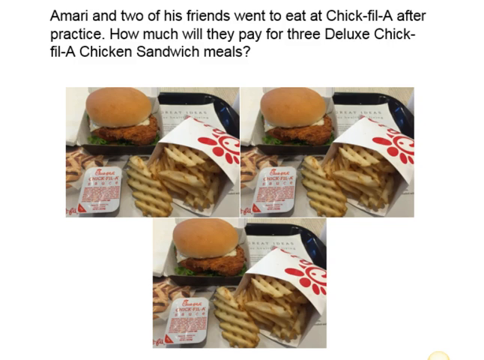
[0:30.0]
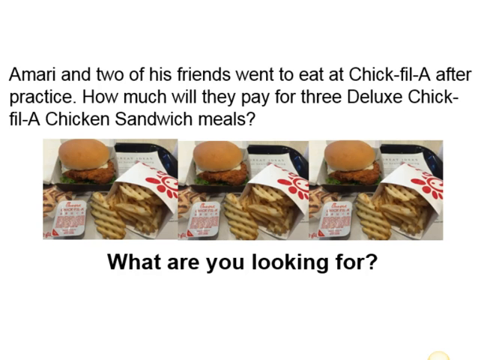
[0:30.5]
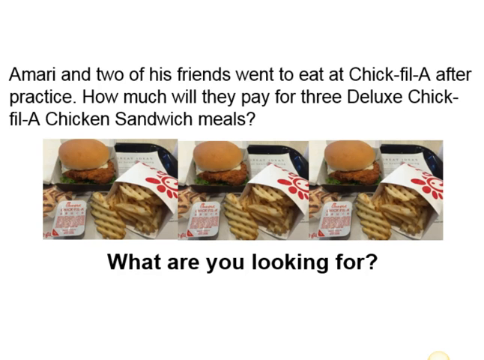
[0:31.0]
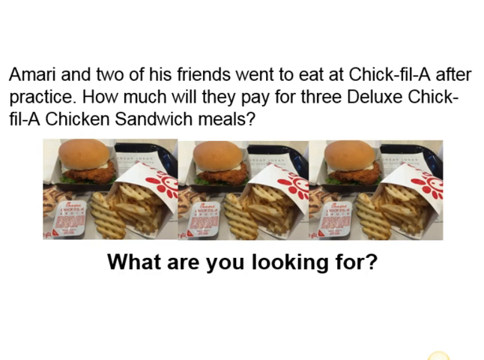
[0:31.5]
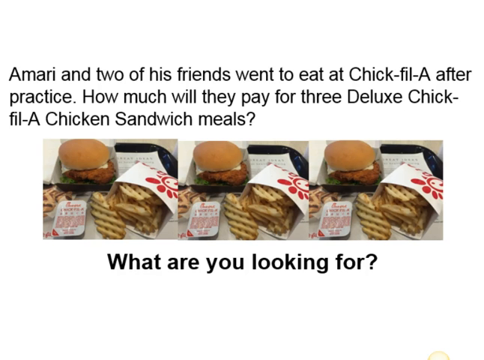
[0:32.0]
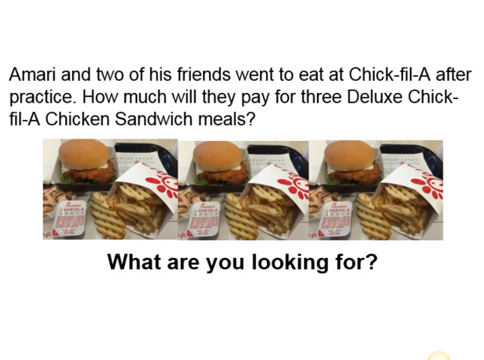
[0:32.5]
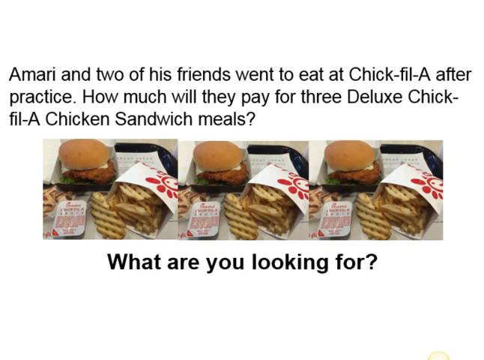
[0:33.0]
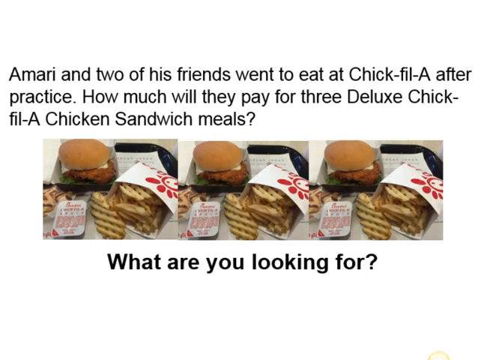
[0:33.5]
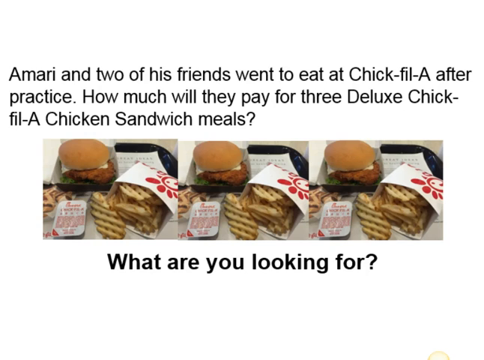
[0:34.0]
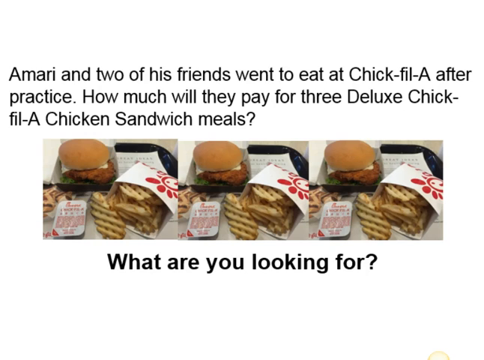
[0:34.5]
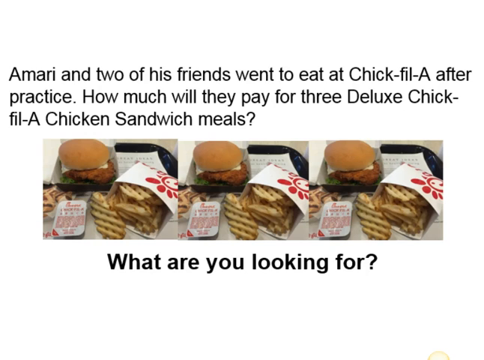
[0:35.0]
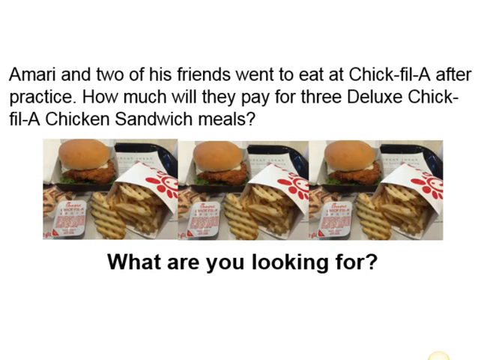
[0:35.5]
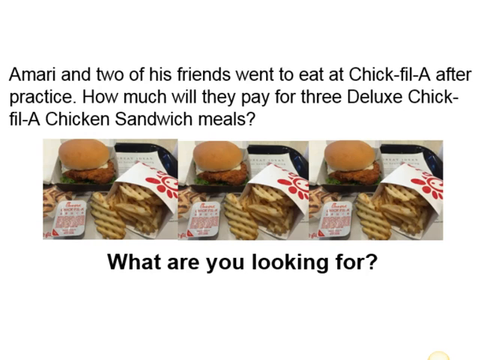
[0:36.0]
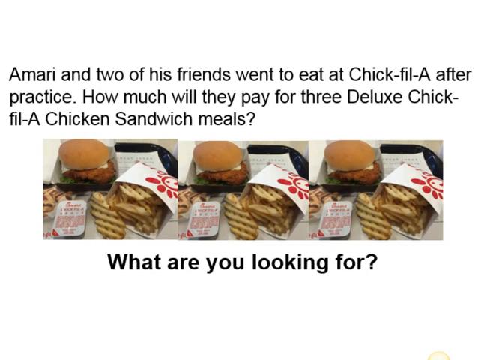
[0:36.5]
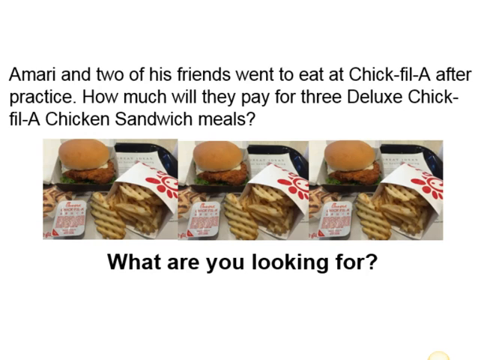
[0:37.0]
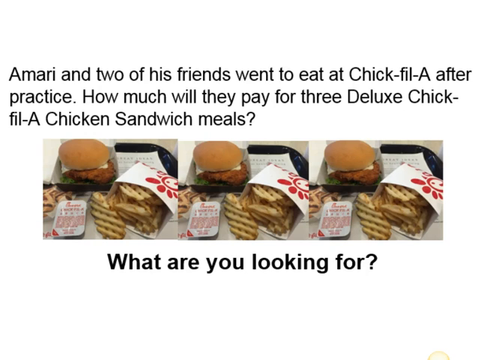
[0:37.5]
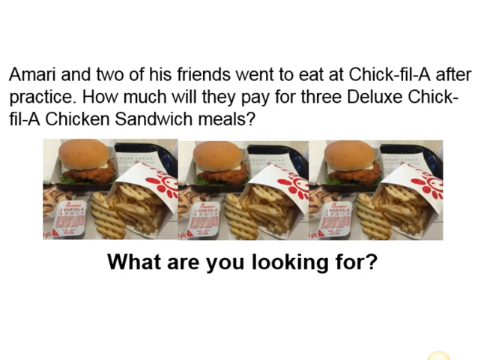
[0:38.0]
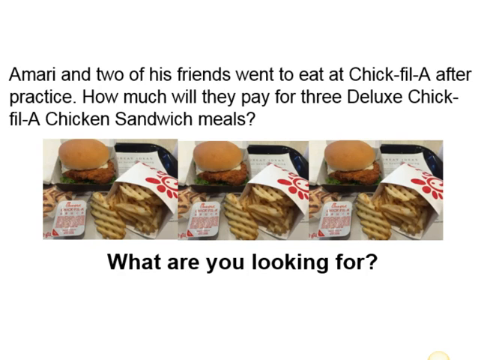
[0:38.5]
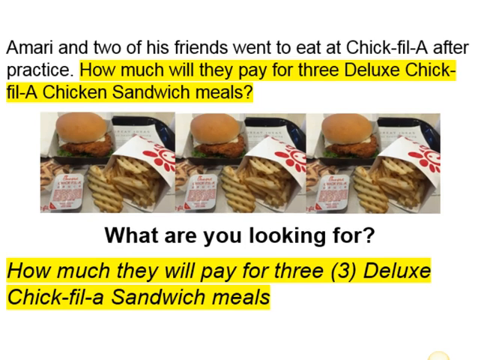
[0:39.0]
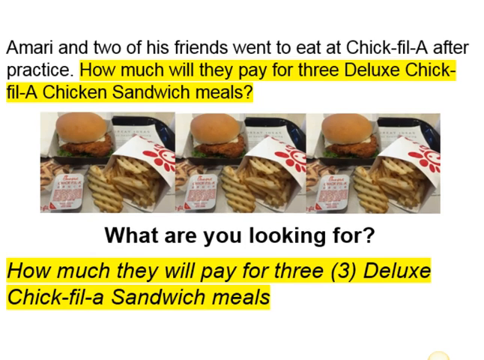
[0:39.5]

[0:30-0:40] The same pictures are shown, then the layout changes so all three small pictures are in a row rather than stacked. Underneath them the text says "what are you looking for?" Above the pictures it says "Amari and two of his friends went to eat at Chick-fil-A after practice. How much will they pay for three deluxe Chick-fil-A chicken sandwich meals?" The bottom of the screen is plain white. Nothing else changes until the very last second, when the second line of the first paragraph is highlighted in yellow.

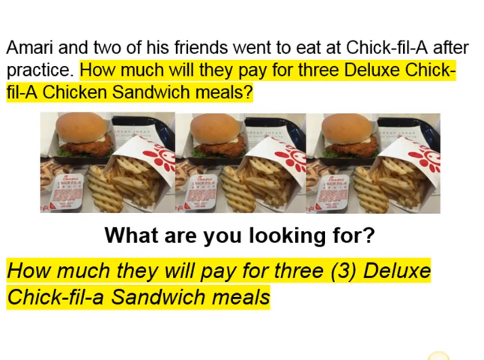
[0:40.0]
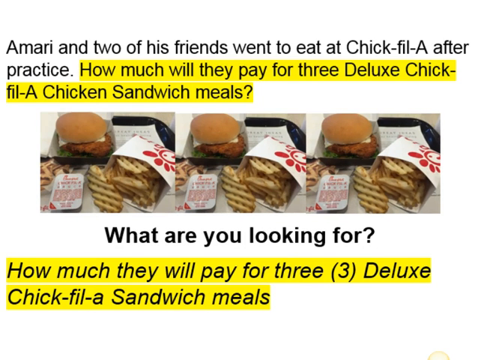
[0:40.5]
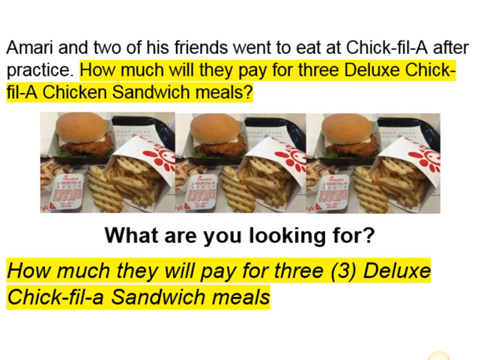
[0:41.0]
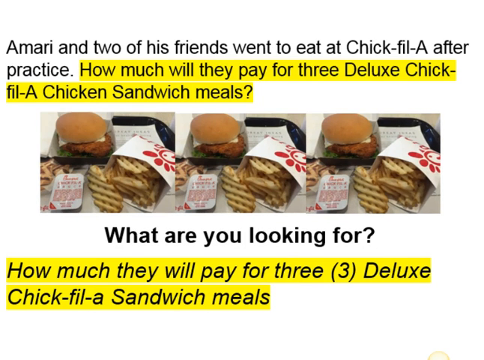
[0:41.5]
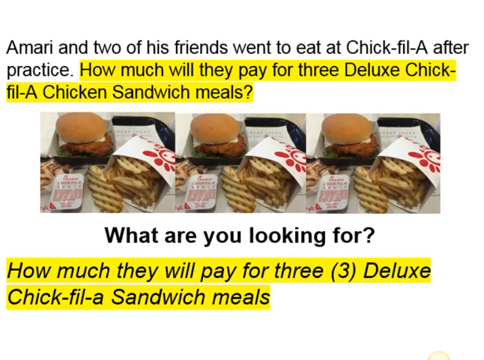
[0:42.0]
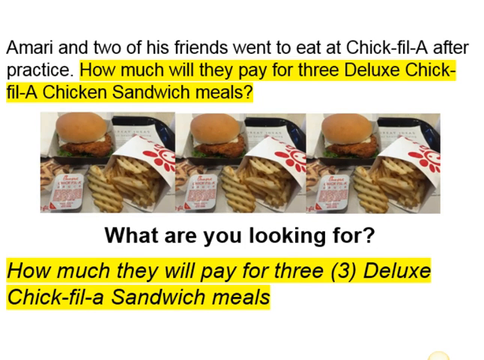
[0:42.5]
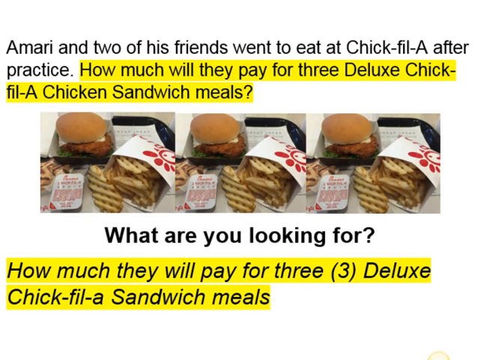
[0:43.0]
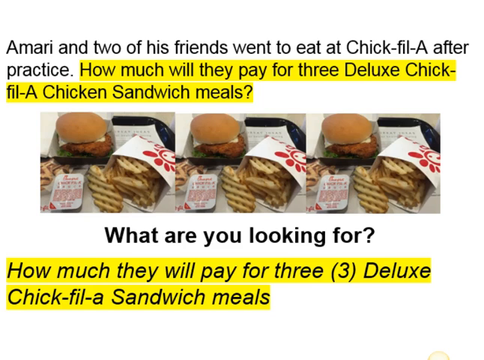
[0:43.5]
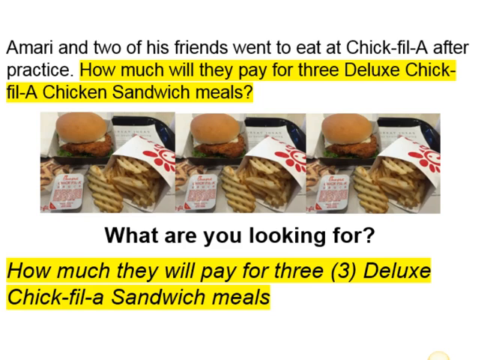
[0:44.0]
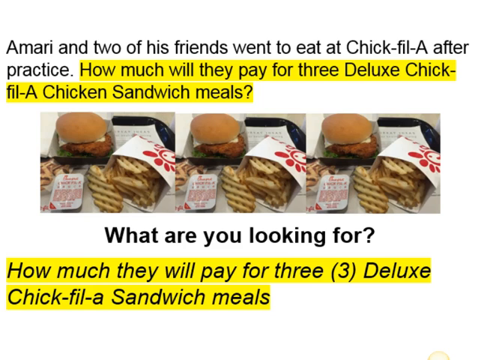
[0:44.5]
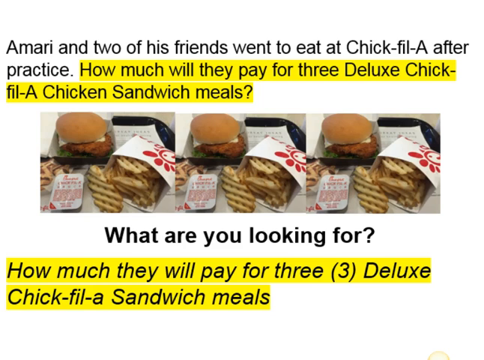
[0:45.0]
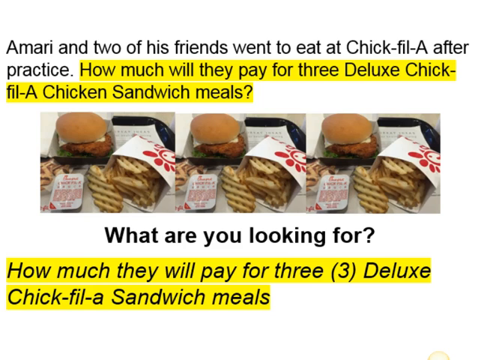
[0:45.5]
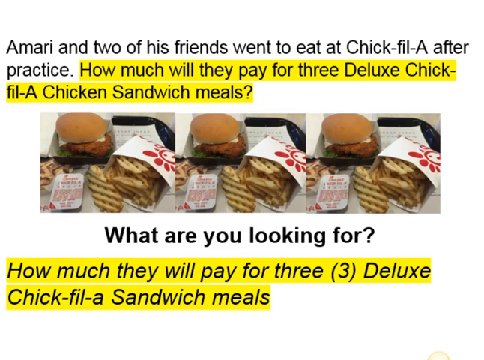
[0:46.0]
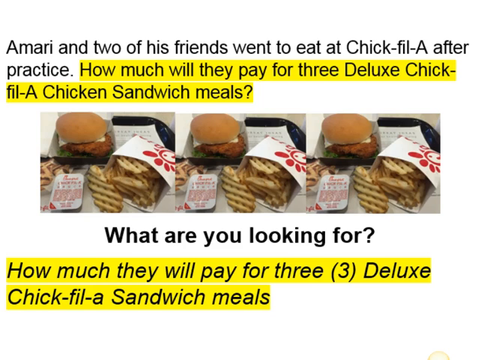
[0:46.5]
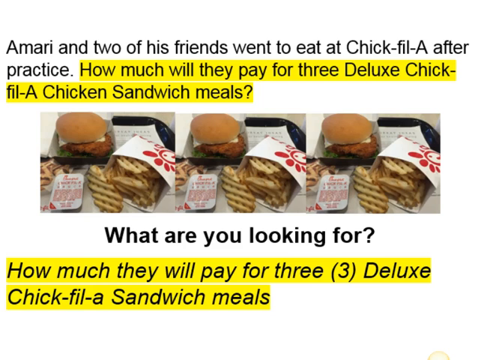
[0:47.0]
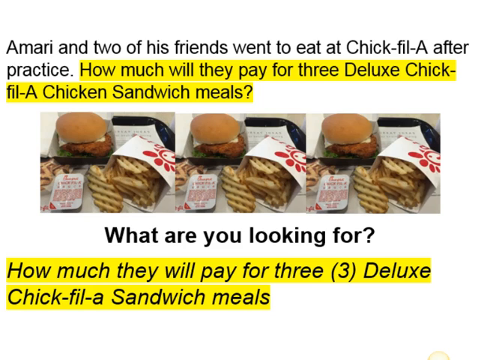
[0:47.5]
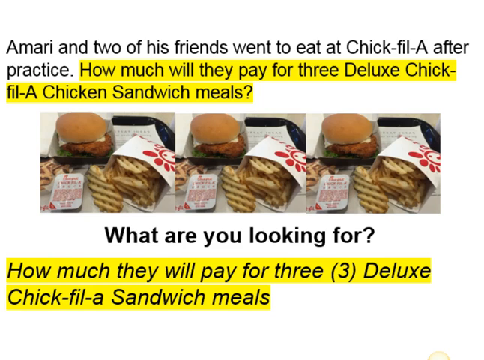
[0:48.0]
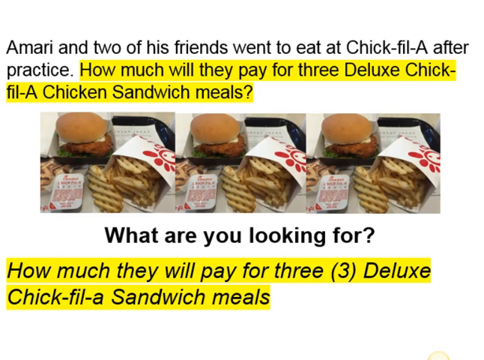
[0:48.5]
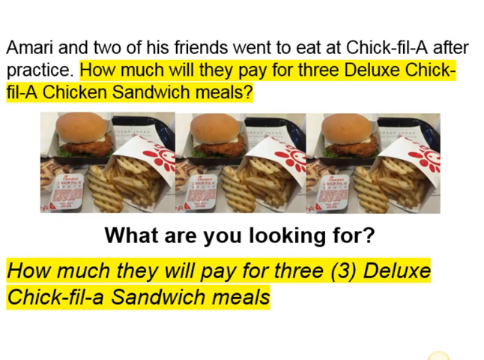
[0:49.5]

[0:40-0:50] The top text reads "Amari and two of his friends went to eat at Chick-fil-A after practice. How much will they pay for three deluxe Chick-fil-A chicken sandwich meals?" The last line of the first paragraph is highlighted in yellow. The next paragraph, which says "how much will they pay for three deluxe Chick-fil-A sandwich meals," is also highlighted in yellow. The three small pictures of the same meal remain: a chicken sandwich on a bun, a container of French fries, and a small container for sauce, on a black tray with white paper.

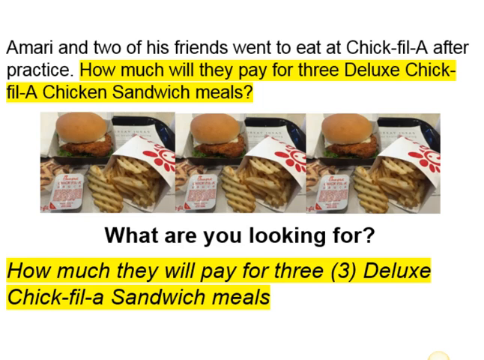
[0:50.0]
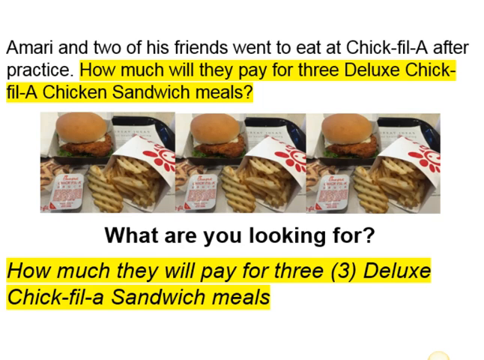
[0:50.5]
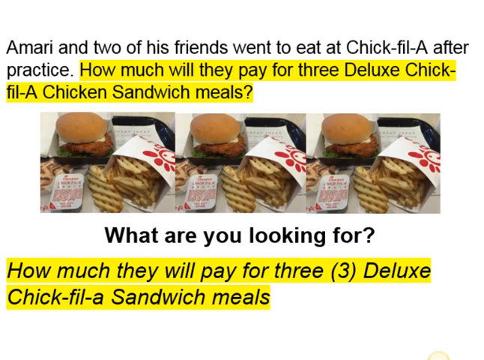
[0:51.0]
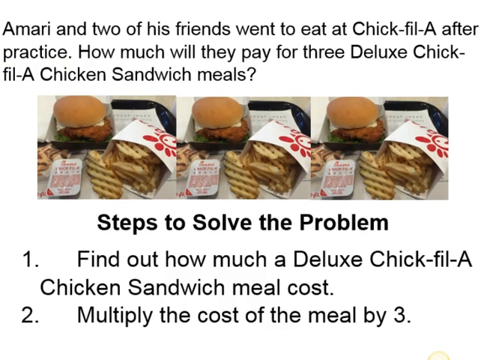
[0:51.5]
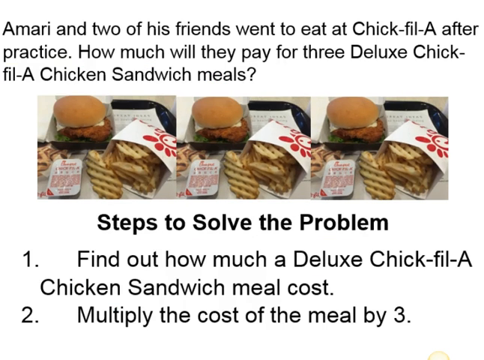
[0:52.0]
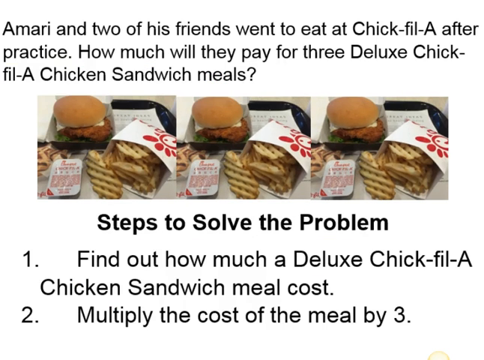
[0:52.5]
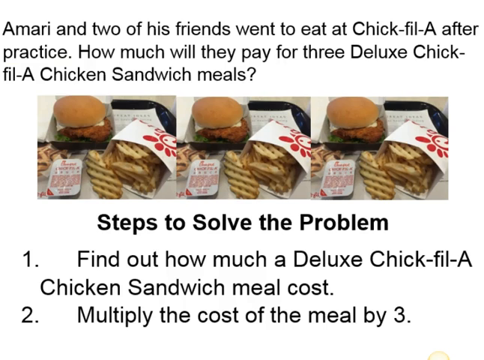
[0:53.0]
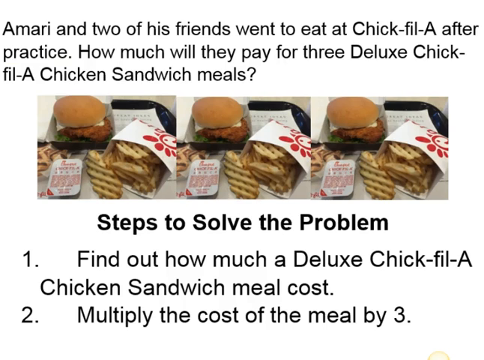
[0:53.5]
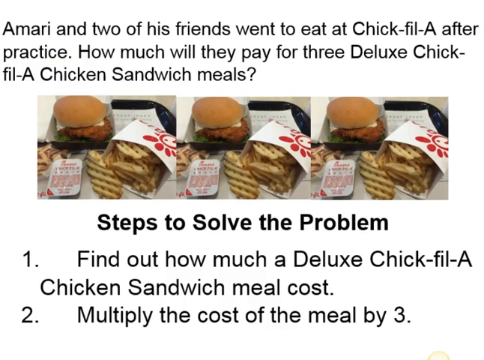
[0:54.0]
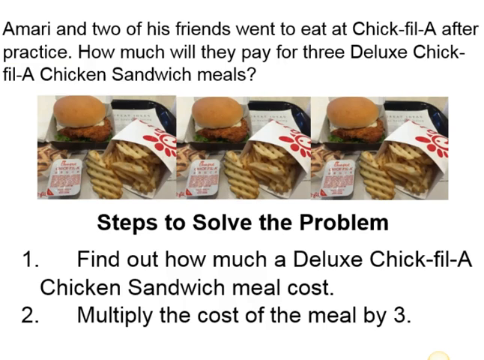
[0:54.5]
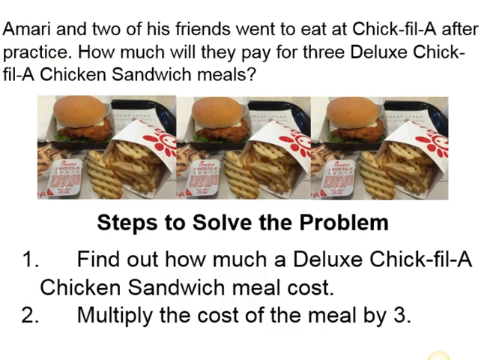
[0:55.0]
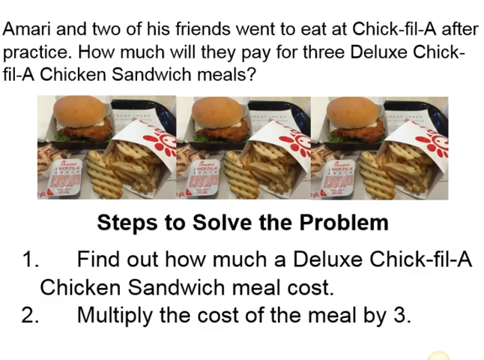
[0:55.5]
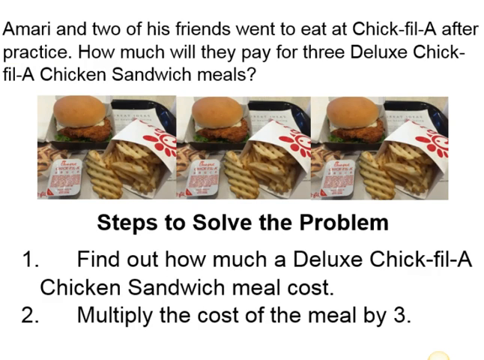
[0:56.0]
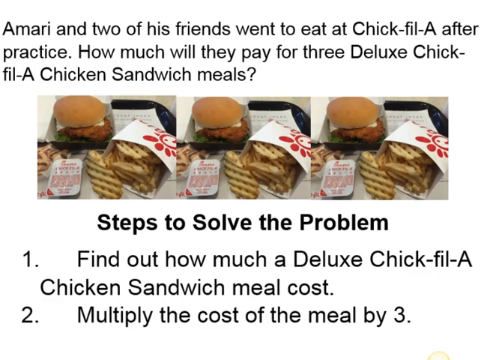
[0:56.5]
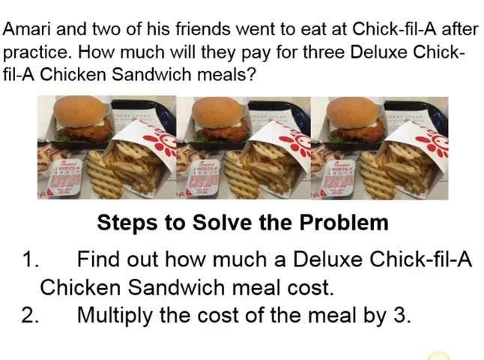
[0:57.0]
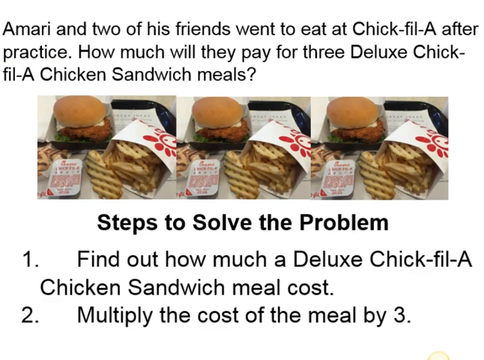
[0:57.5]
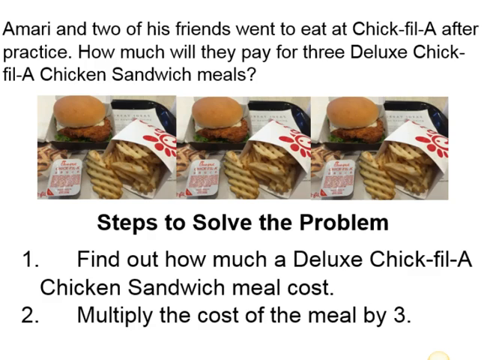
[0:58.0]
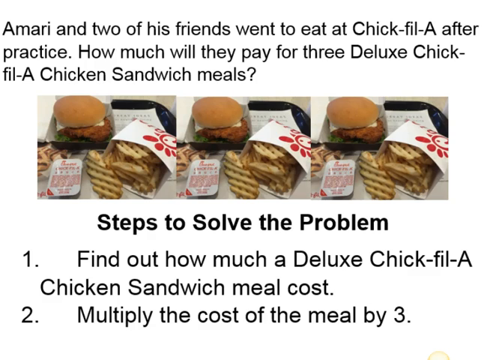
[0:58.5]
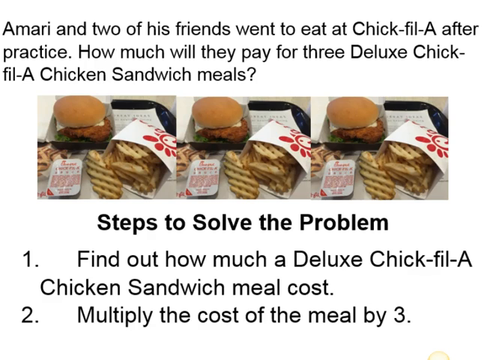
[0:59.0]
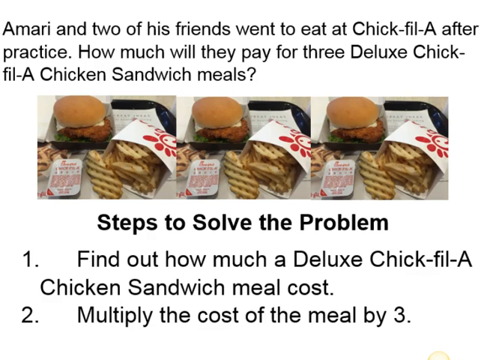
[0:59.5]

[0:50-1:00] The three pictures of the sandwiches, French fries and sauces remain on screen. The highlight has come off the second line of the top paragraph. A new paragraph at the very bottom reads "steps to solve the problem. Number one, find out how much a deluxe chicken sandwich meal costs. Number two, multiply the cost of the meal by three." The picture stays the same throughout.